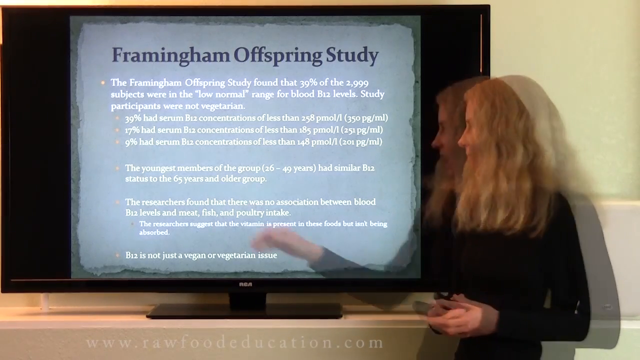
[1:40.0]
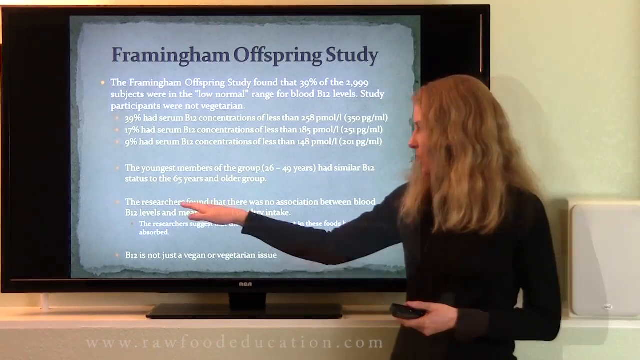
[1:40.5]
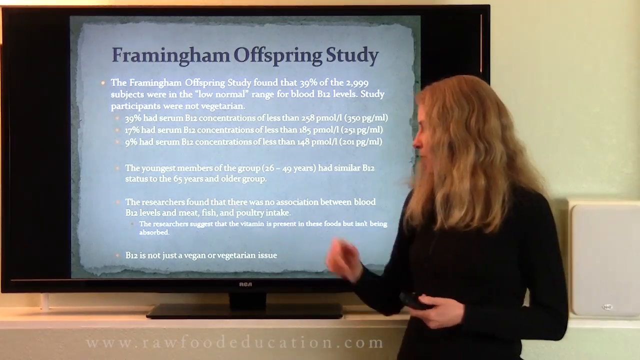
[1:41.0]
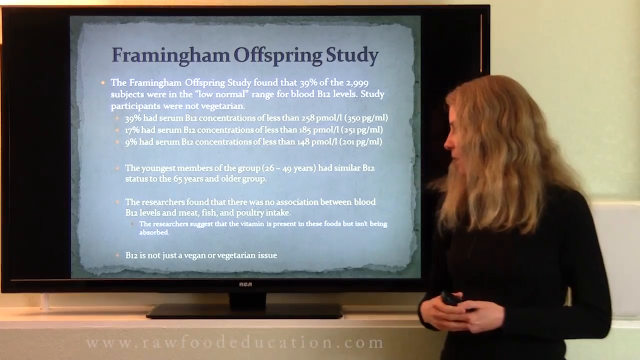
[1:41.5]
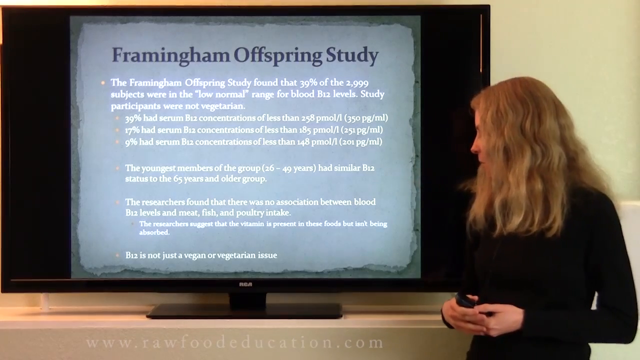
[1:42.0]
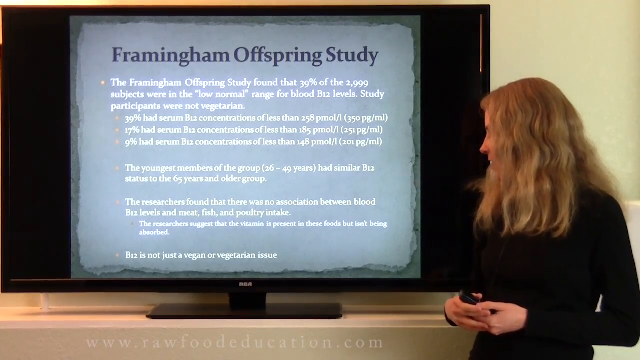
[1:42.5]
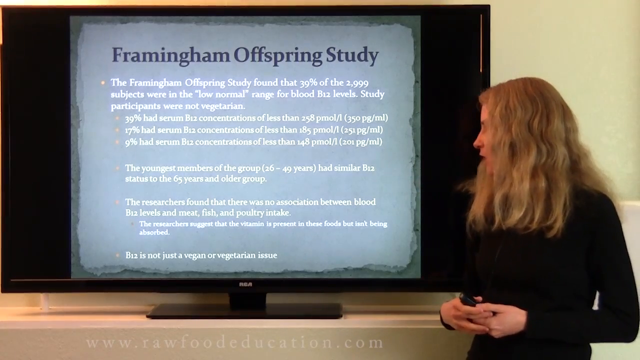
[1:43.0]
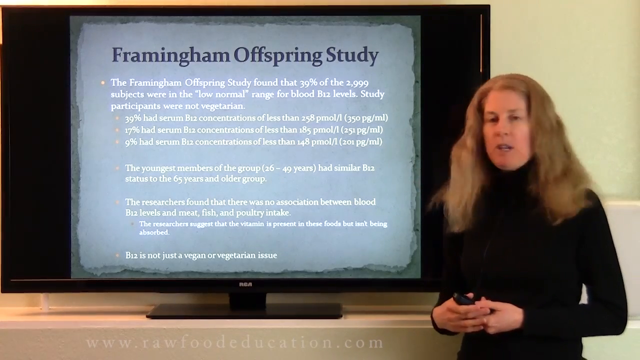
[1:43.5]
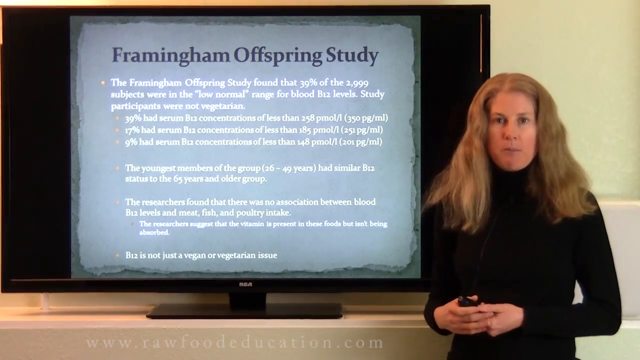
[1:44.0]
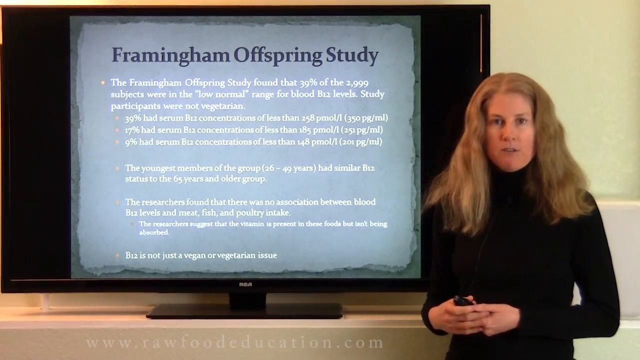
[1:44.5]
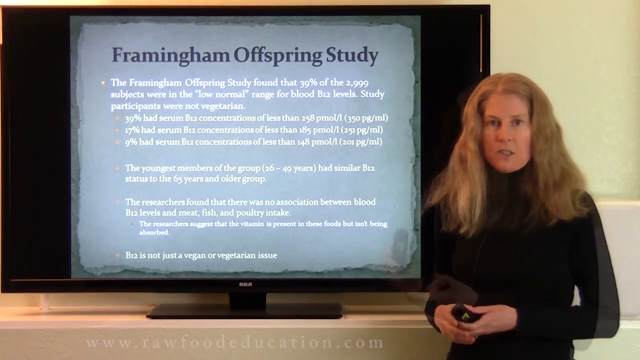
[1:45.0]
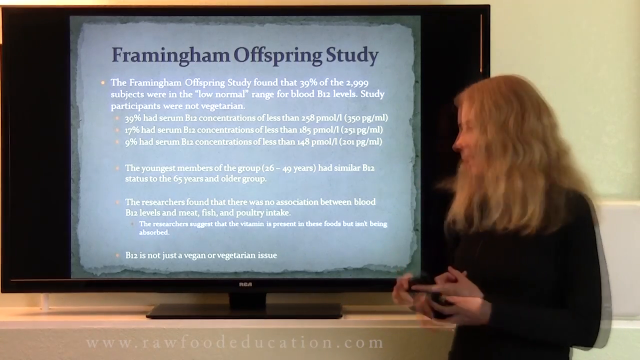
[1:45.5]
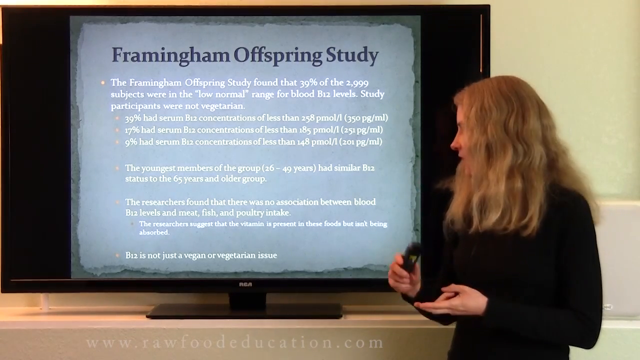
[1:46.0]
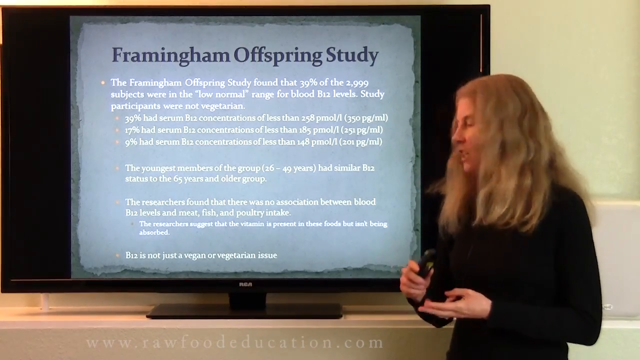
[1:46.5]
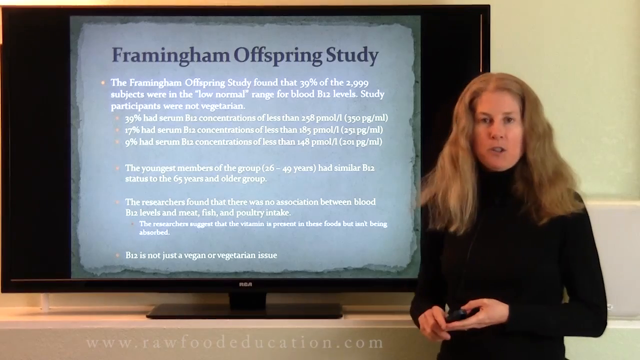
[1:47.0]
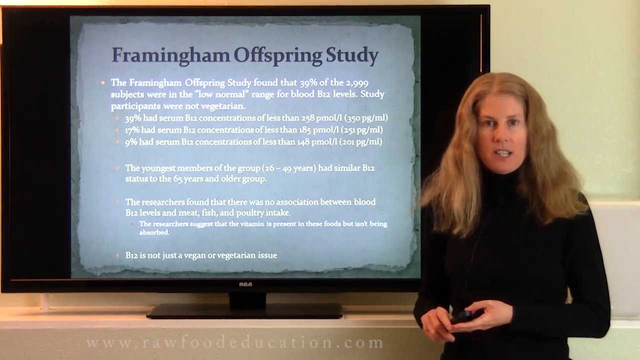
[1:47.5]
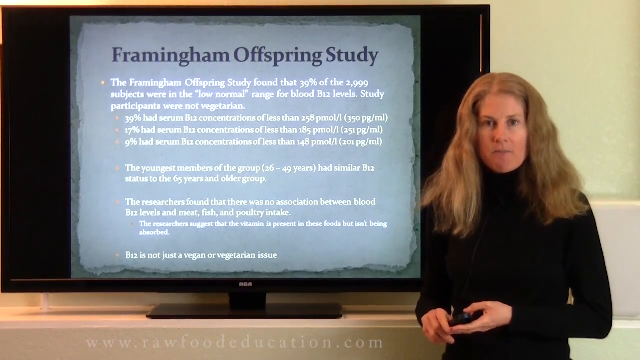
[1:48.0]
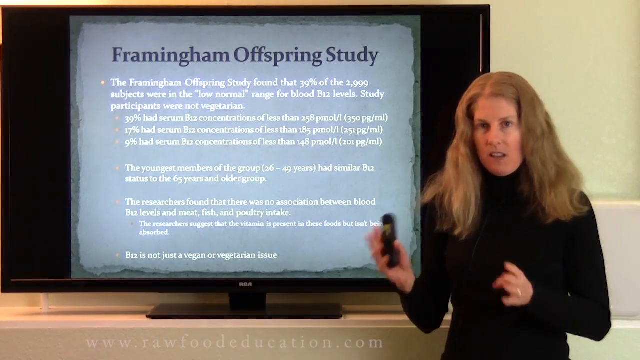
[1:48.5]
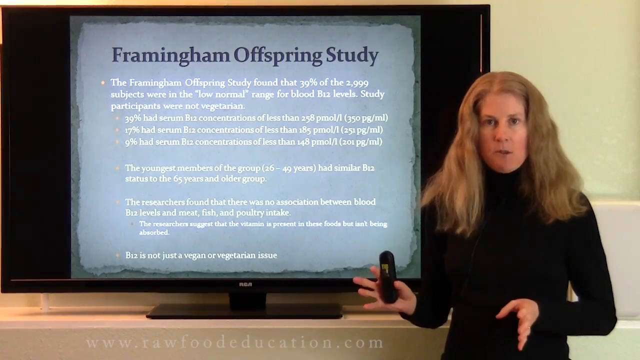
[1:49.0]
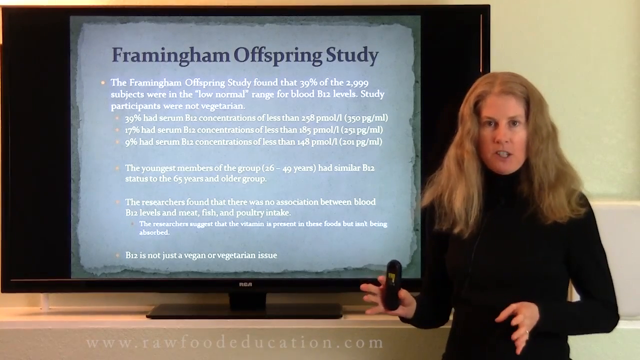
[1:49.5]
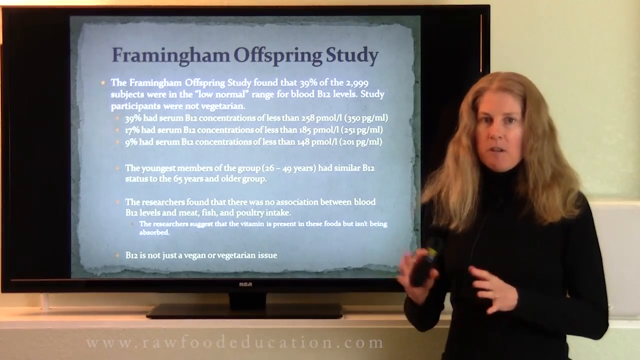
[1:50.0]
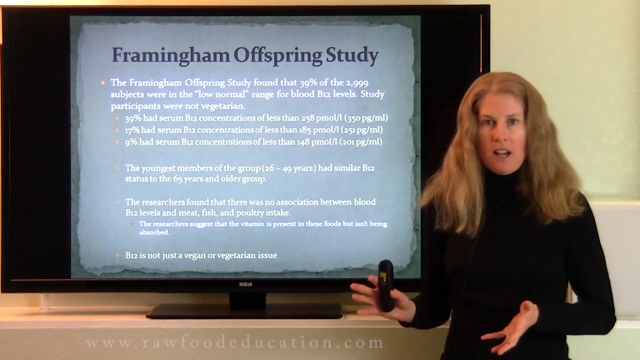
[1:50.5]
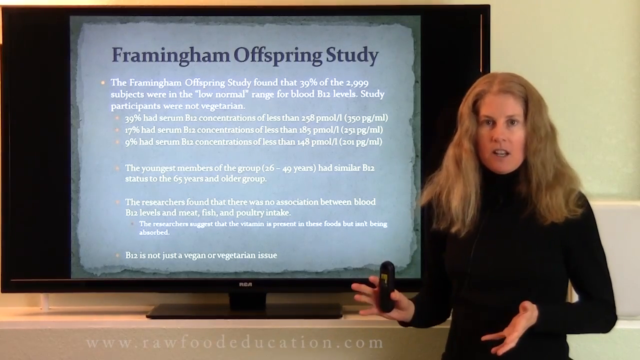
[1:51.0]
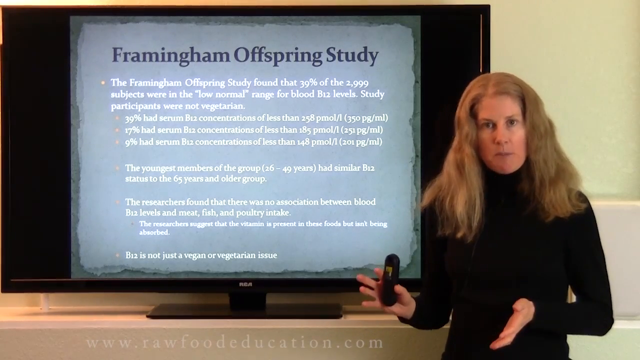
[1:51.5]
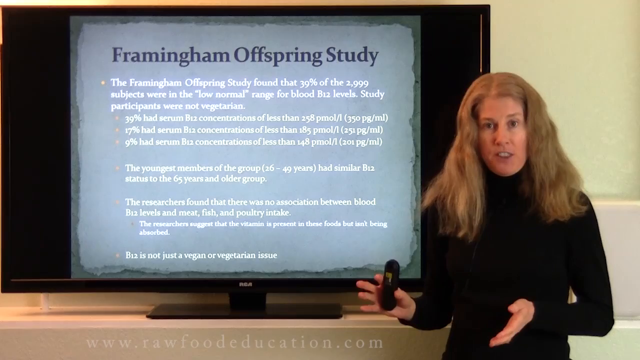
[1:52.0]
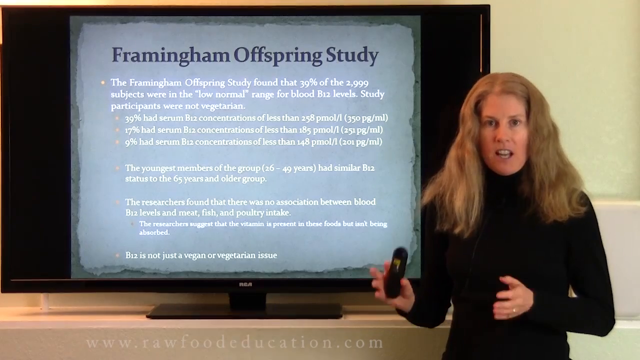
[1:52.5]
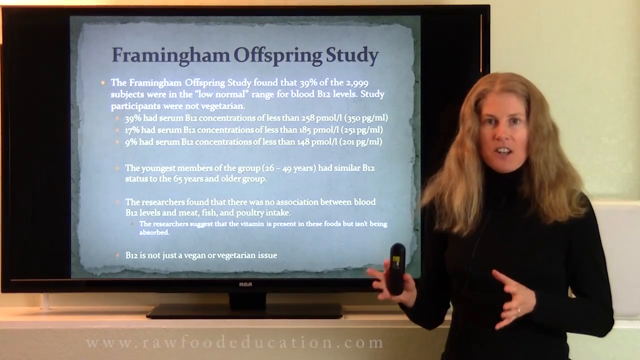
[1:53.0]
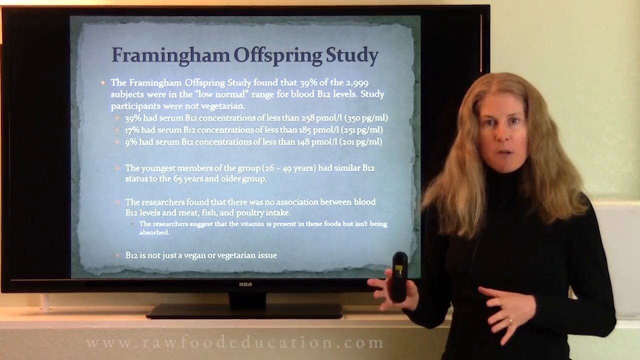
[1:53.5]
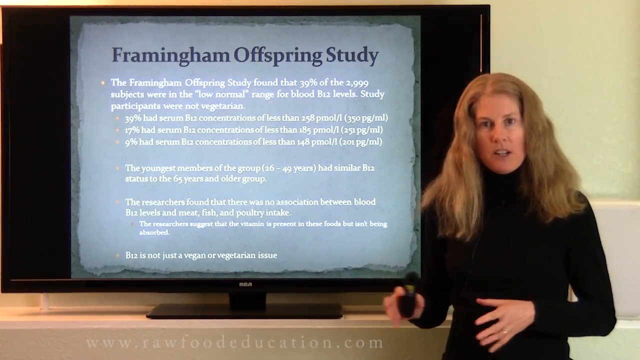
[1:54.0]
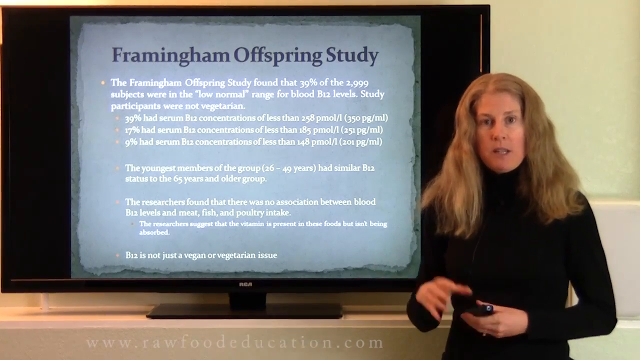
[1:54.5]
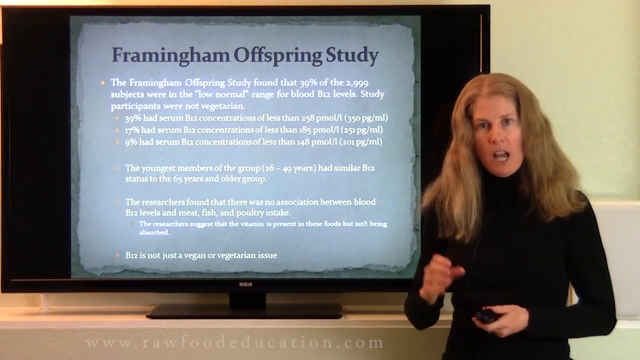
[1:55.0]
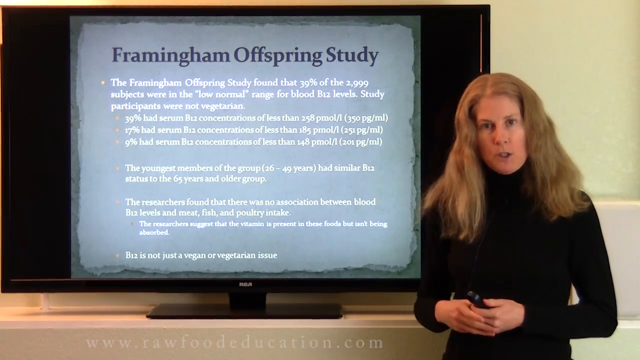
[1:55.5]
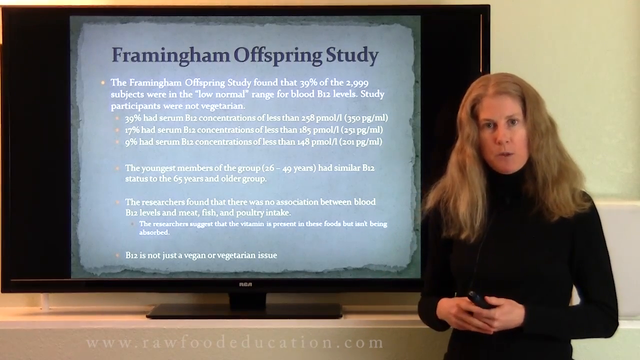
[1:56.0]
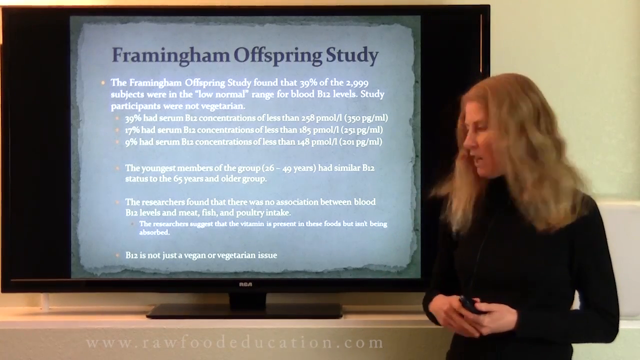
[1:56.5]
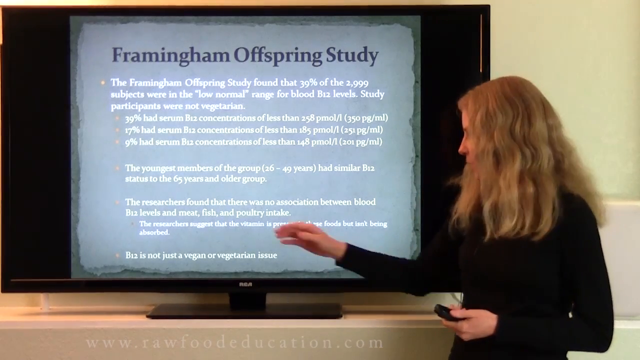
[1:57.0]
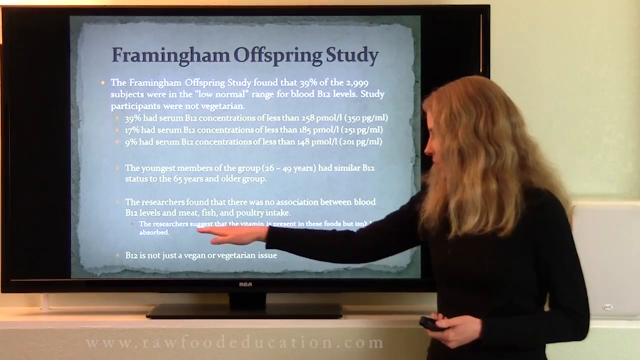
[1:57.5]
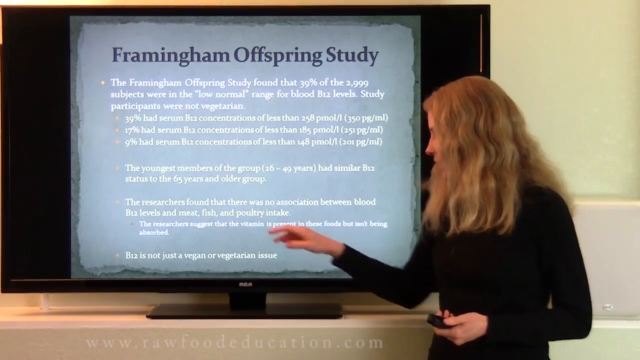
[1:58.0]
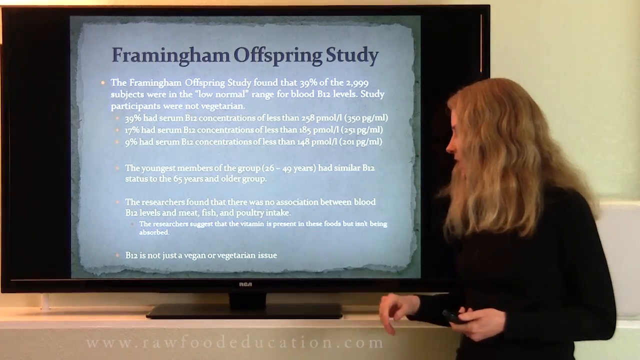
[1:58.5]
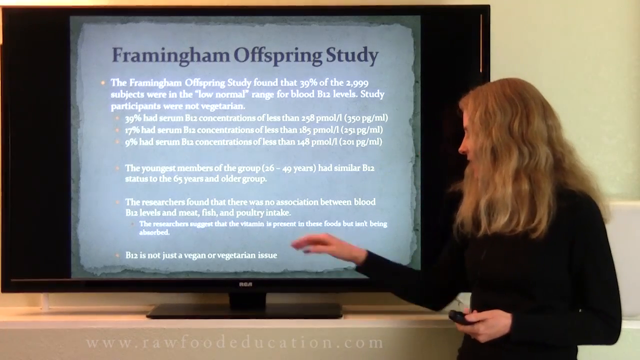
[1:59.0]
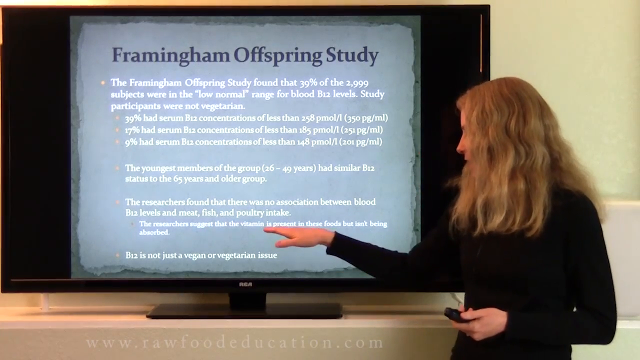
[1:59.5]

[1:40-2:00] The woman in the black shirt, Caucasian, around 40, with middle-length blonde hair, continues with the Framingham Offspring Study, showing information about the kind of youngest members of the group. She points at text related to the researchers and other findings of the study on the giant, large kind of TV screen behind her. No other people or animals appear, and the video stays on the same setting and screen without transitioning.